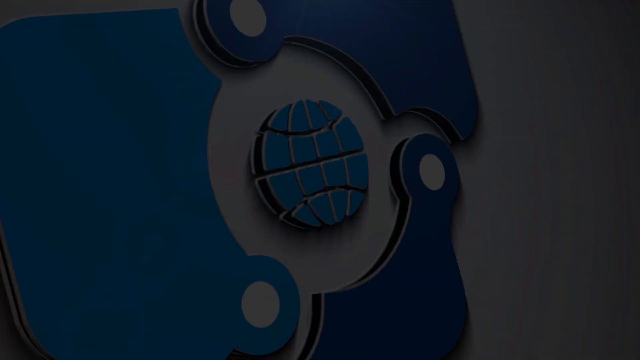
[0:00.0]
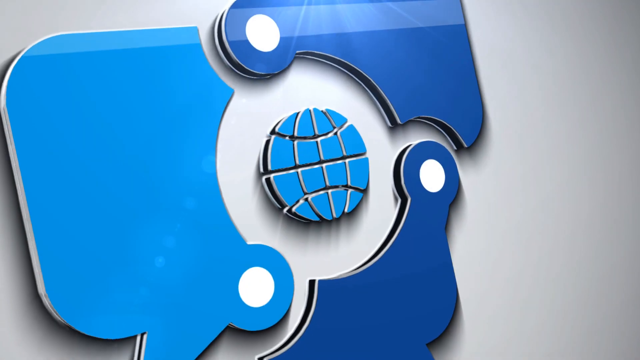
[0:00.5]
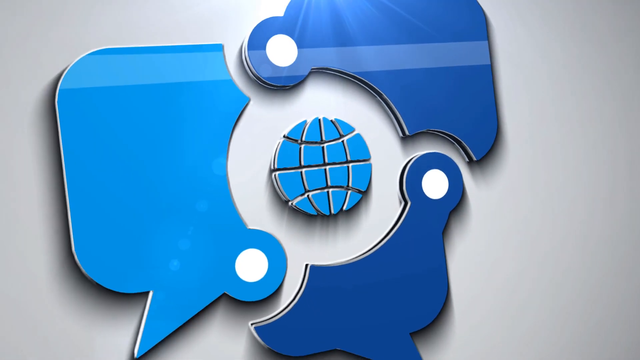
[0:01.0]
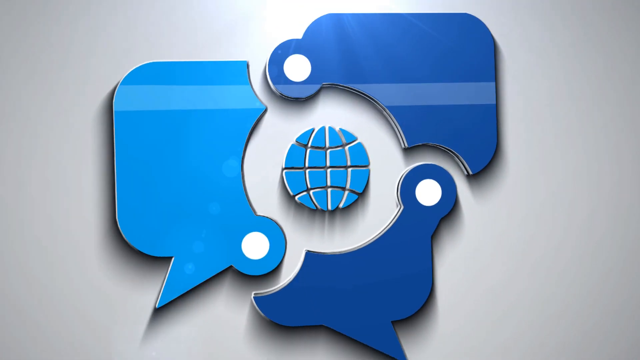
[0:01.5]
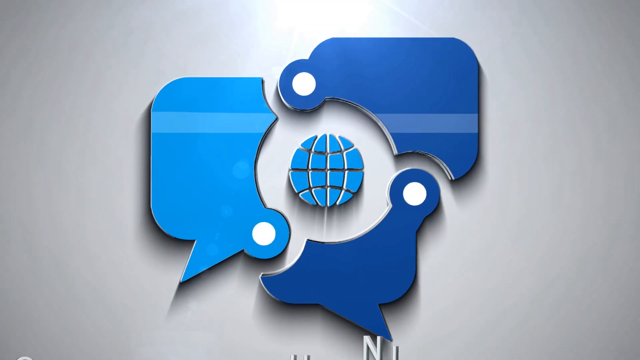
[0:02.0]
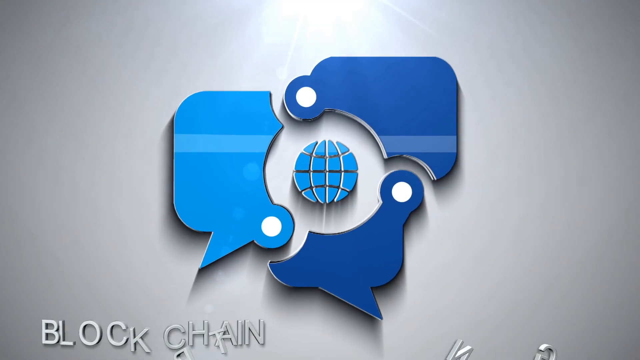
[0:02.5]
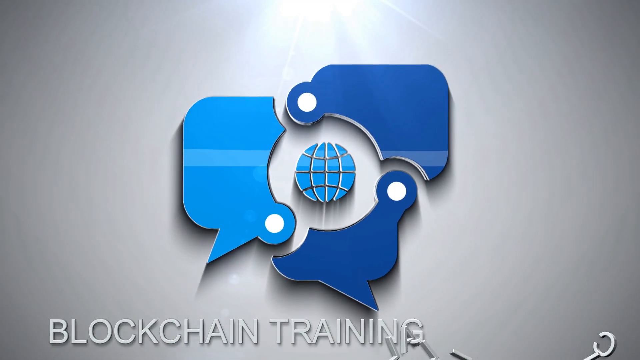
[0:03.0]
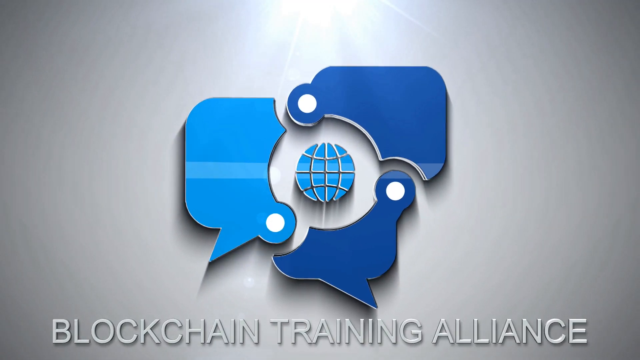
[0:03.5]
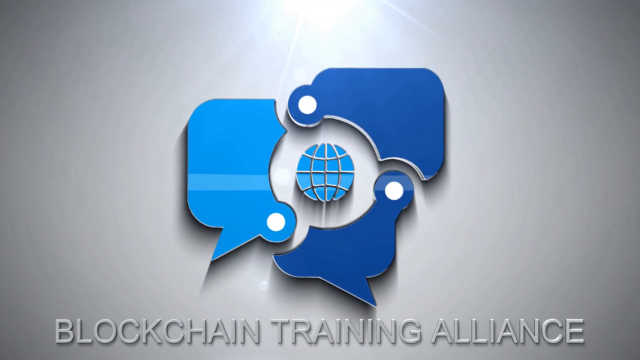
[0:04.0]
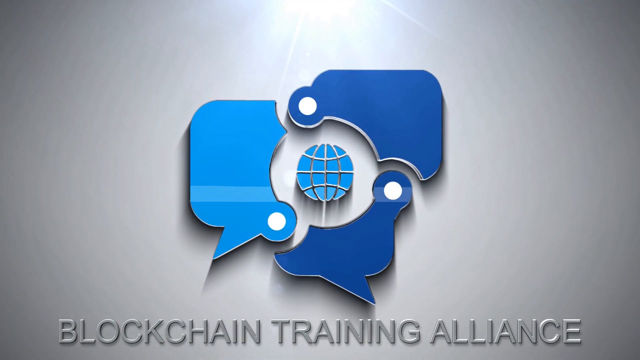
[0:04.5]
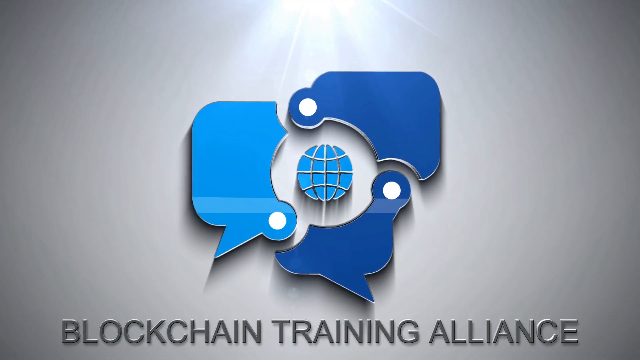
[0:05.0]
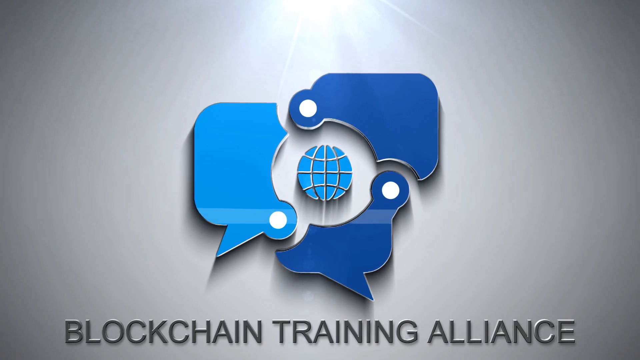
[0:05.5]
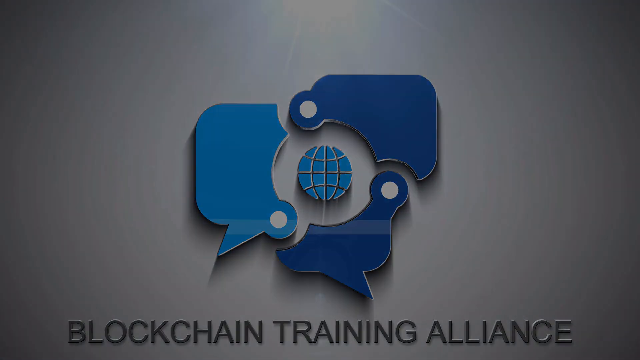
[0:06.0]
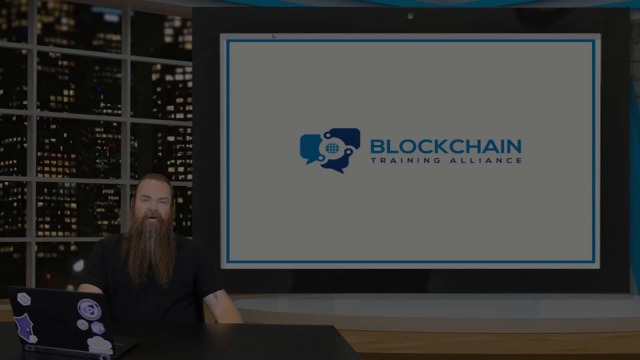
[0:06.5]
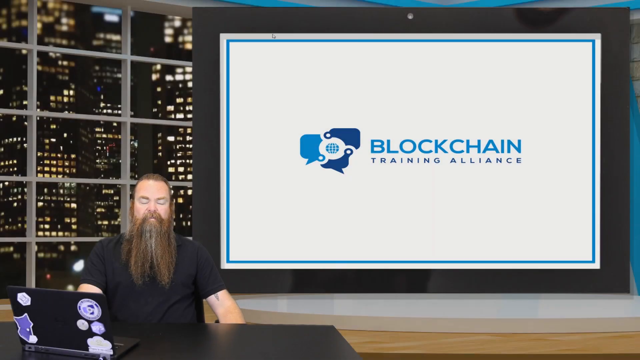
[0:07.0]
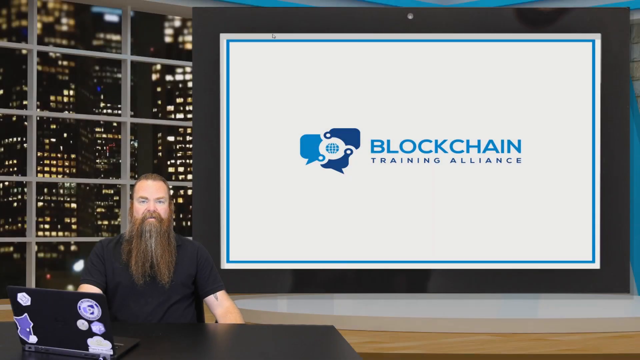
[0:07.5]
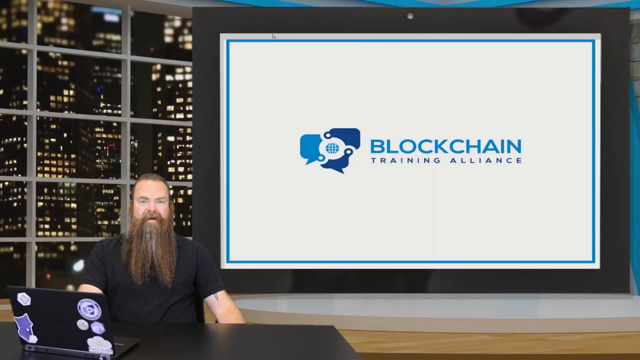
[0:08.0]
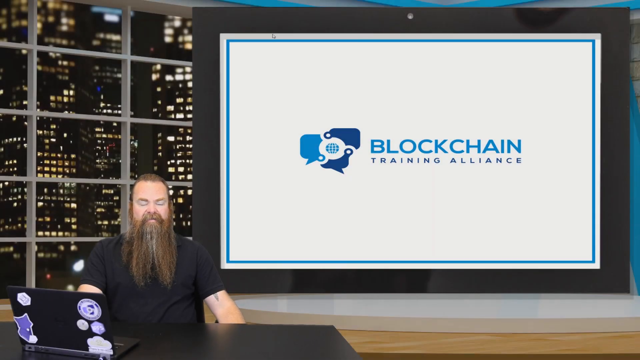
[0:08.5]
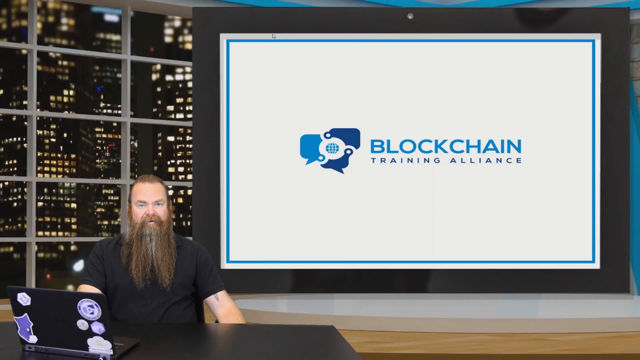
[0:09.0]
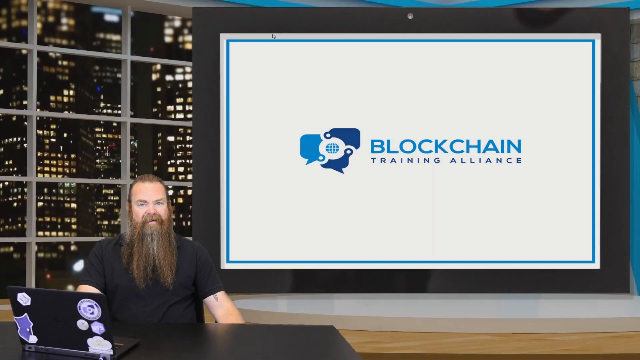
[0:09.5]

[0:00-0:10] The video opens on a blue image of a globe in the center, surrounded by some kind of blue shapes that are hard to make out; they are possibly birds, and seem to have eyes and beaks. Text in the box reads "blockchain training alliance", so the shapes may be what blockchains look like. On the left side of the screen is the host, a man with a long beard that comes probably halfway down his chest. He is sitting in front of a laptop.